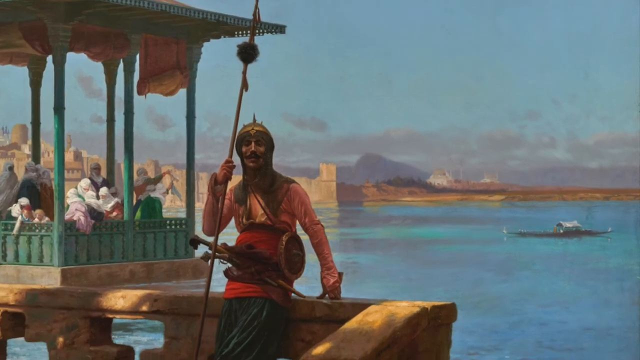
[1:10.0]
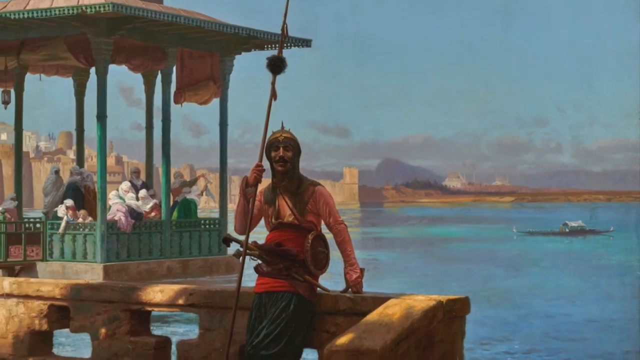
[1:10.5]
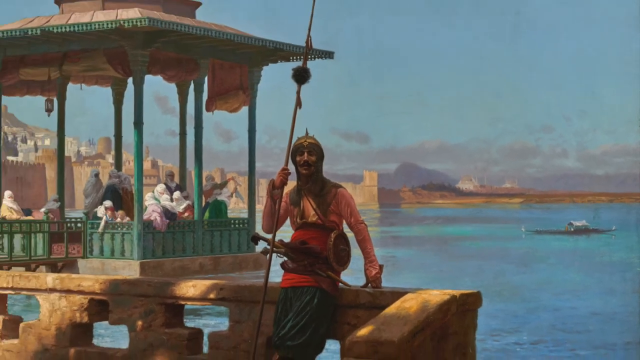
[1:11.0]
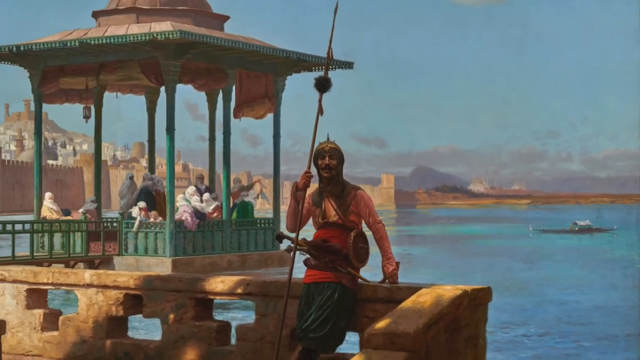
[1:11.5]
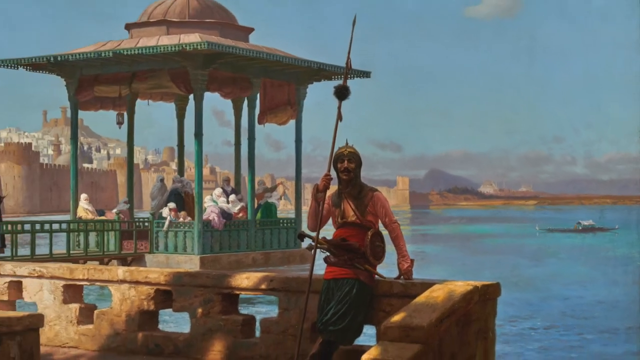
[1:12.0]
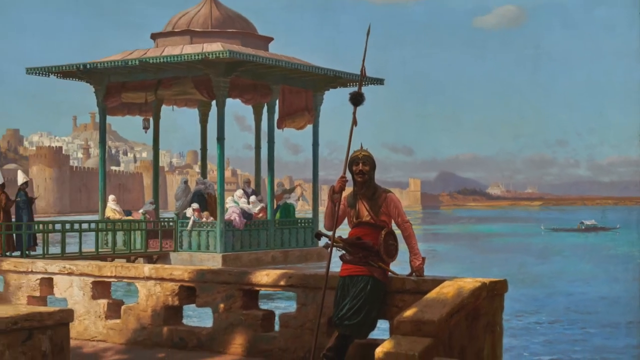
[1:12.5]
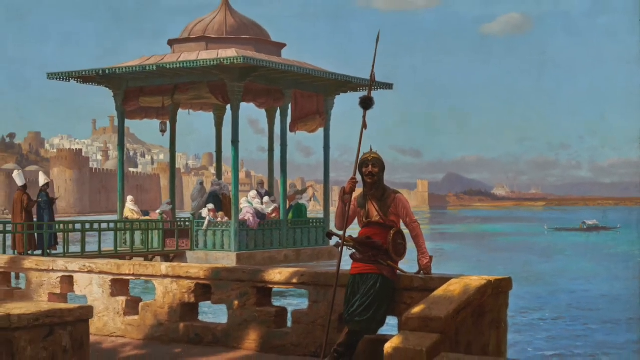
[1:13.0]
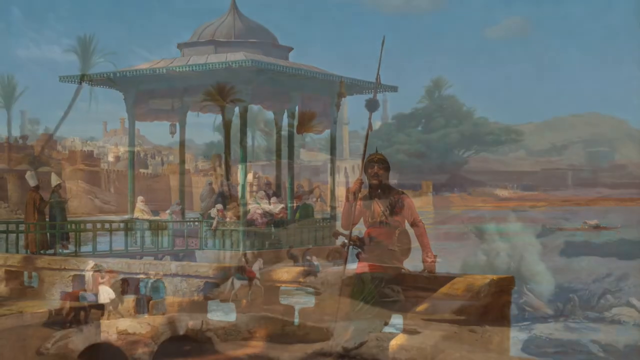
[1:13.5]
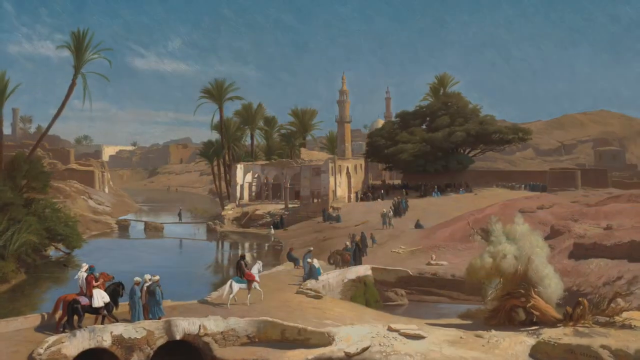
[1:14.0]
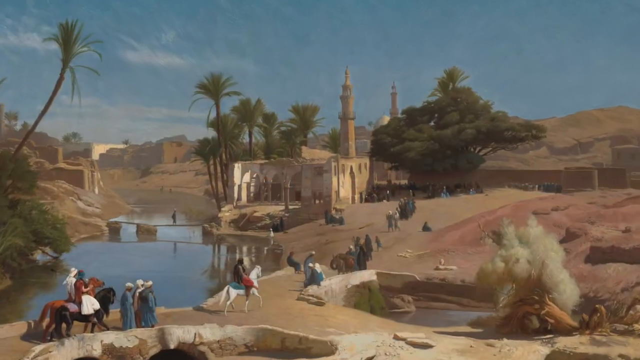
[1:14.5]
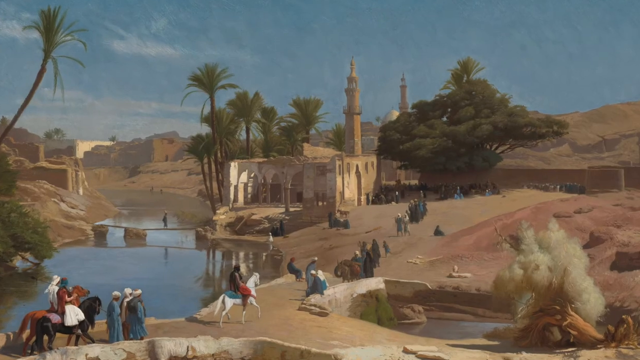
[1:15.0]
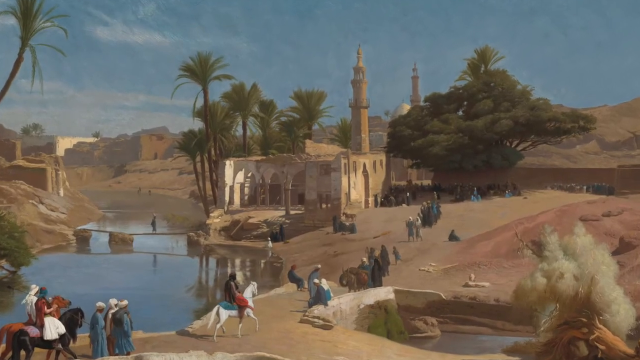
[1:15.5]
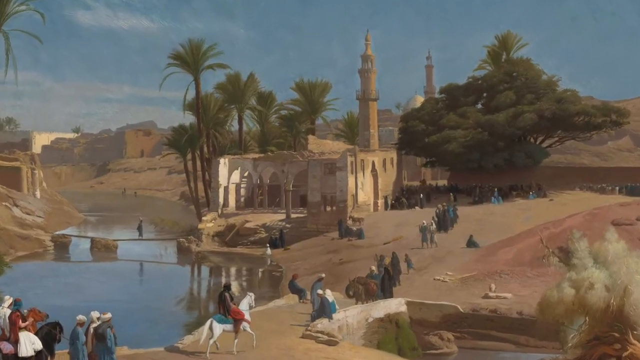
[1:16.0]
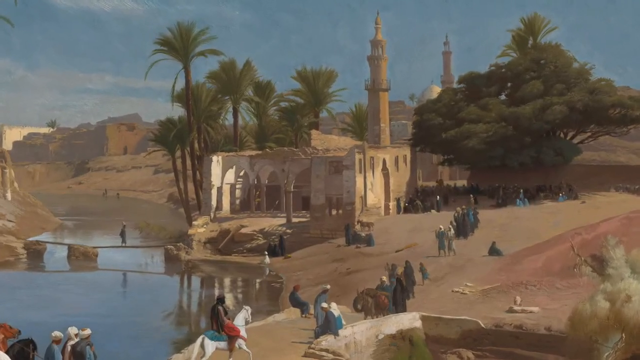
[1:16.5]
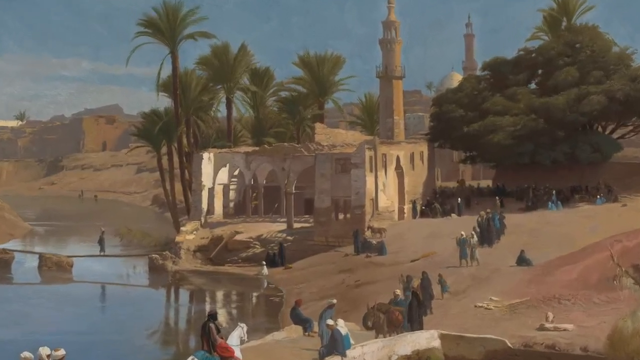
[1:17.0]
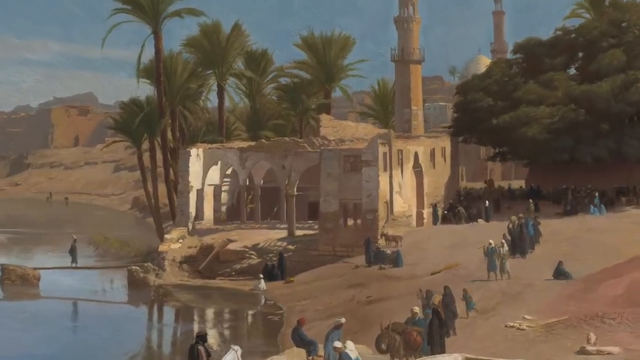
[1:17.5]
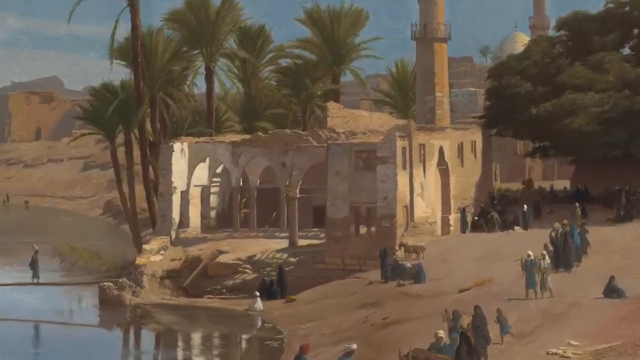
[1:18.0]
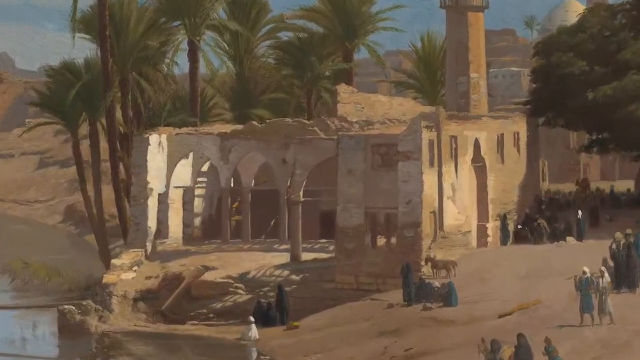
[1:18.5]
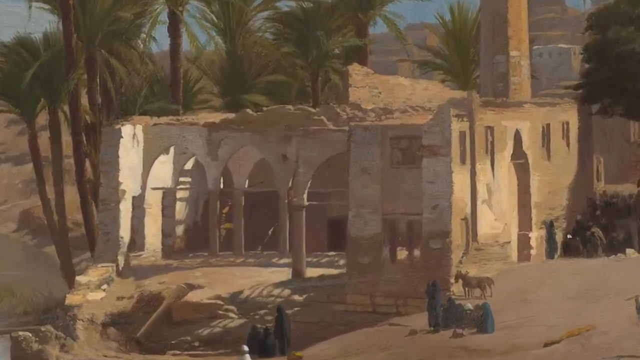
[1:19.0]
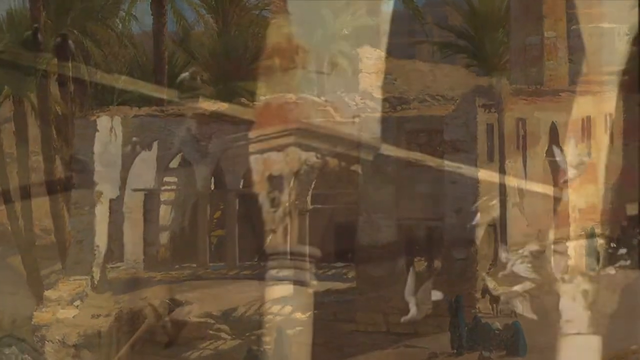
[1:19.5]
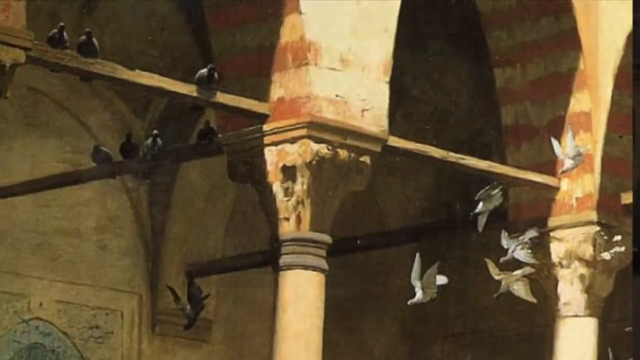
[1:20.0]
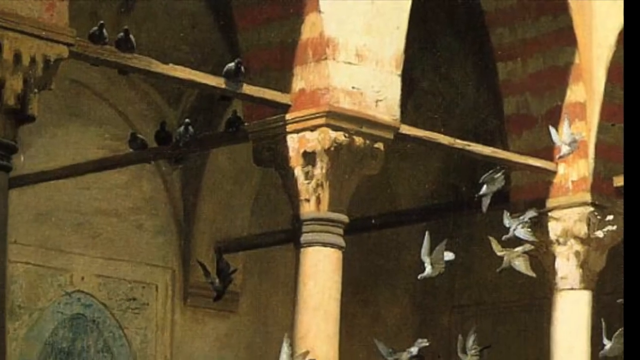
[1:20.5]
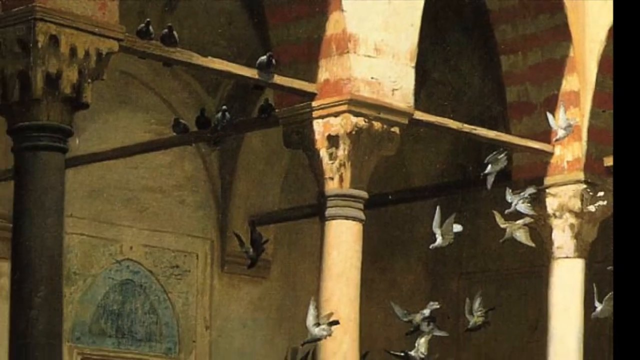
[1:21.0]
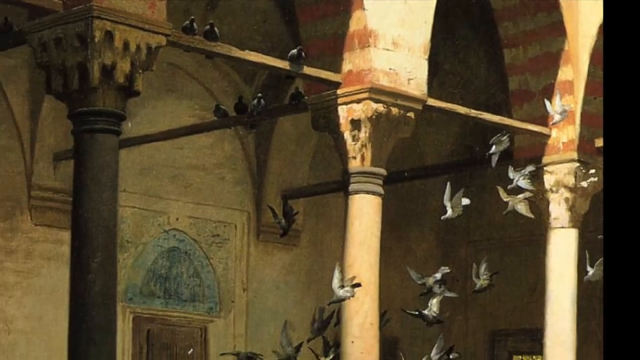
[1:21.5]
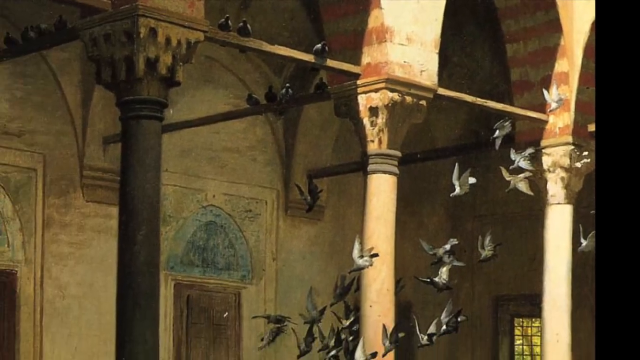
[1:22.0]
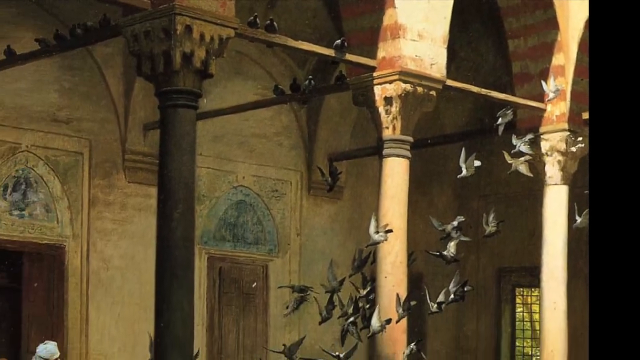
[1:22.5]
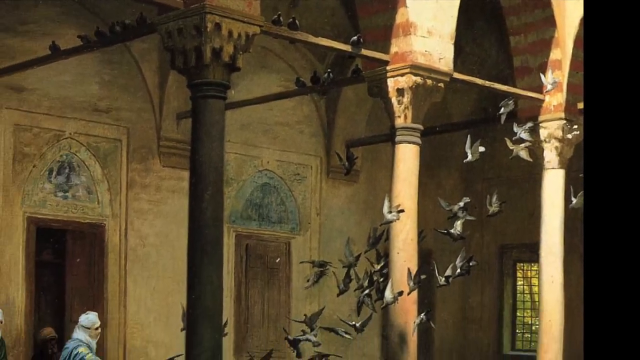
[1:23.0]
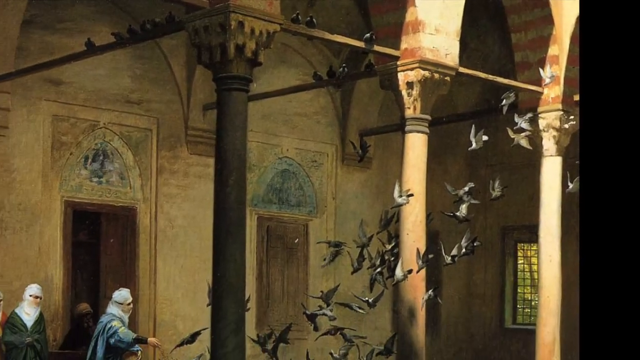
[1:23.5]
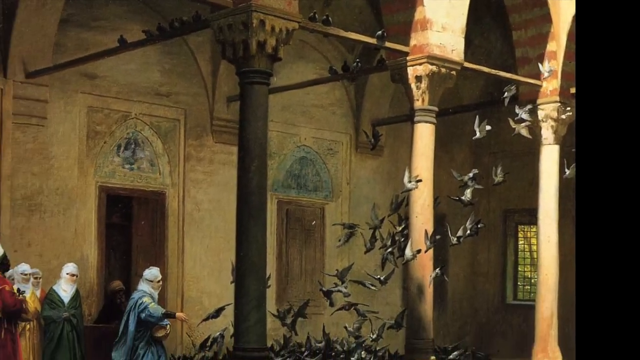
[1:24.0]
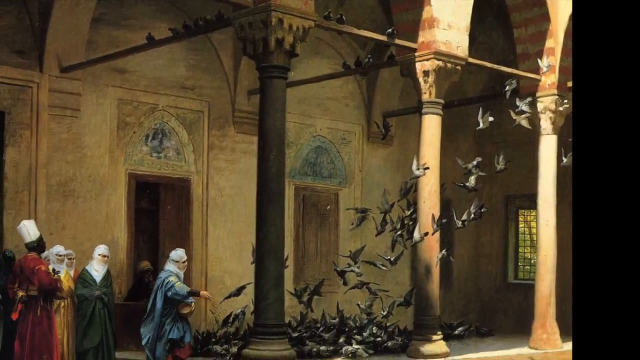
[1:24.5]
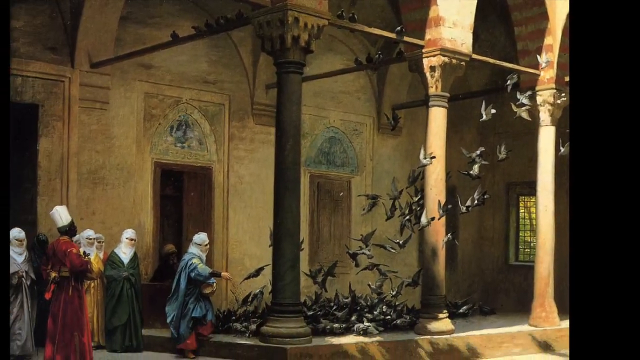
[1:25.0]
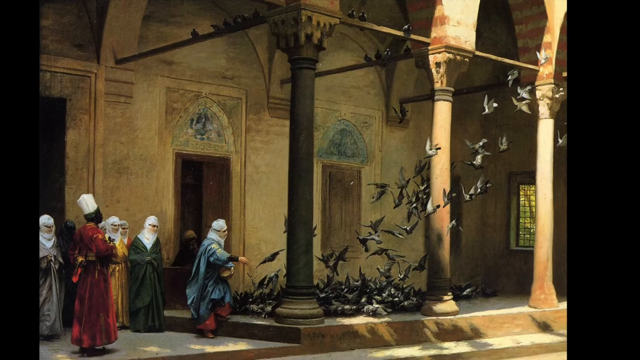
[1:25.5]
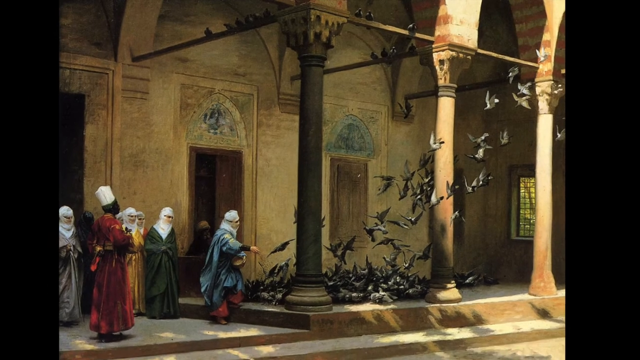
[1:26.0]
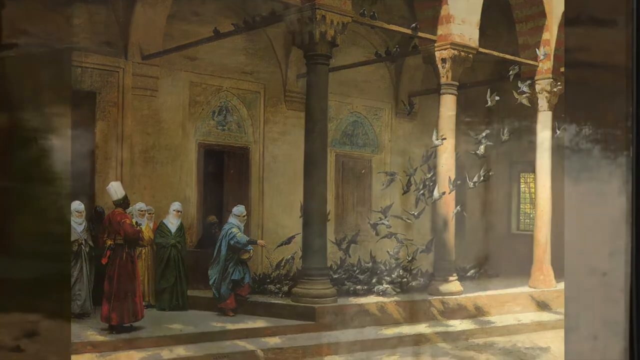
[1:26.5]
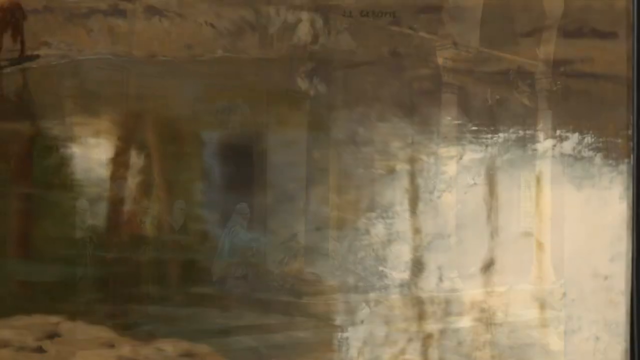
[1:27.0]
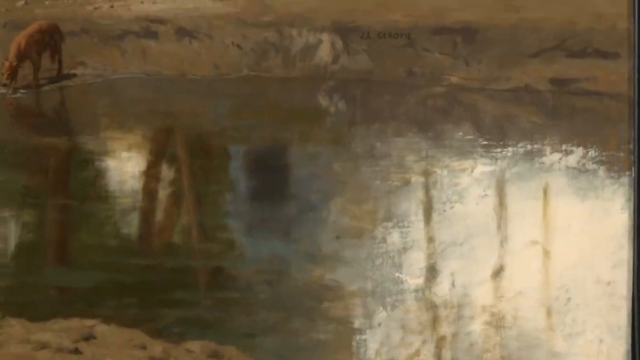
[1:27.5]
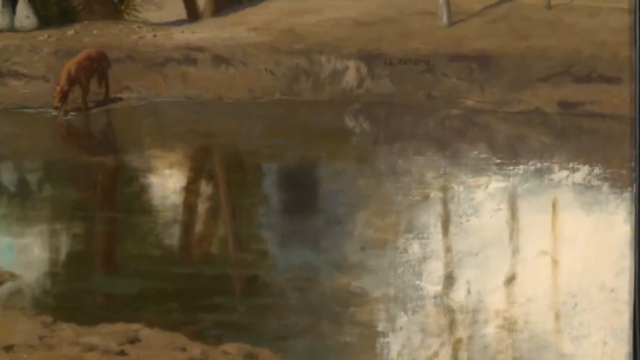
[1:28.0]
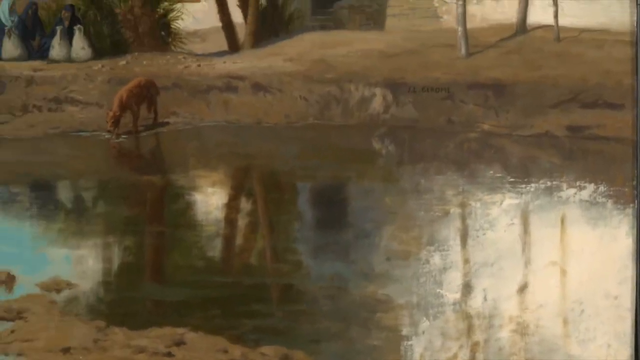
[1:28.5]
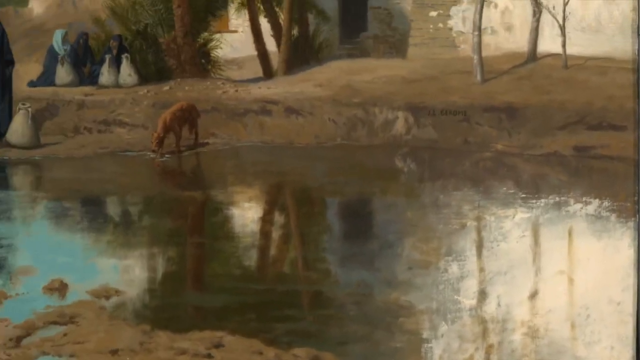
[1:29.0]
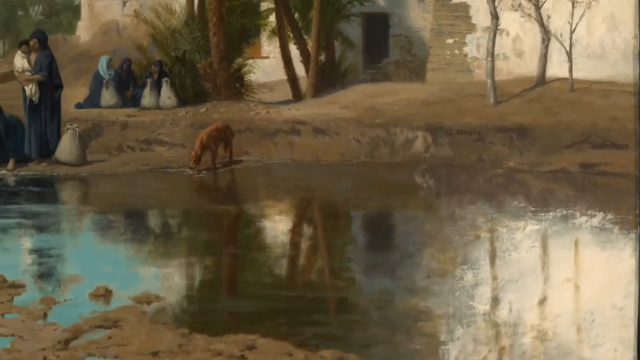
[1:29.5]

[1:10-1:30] An individual in a painting seems to be posing while holding a spear, wearing headgear with a little spike on top. Next to them on the right is something like a canopy or gazebo where some individuals are hanging out. The camera pans out and focuses on a building next to a bunch of trees and the water; the building looks somewhat ancient and worn, but seems to still be in use. The camera then pans inside the building, showing pigeons and some individuals who look like they are feeding them. The individuals wear long garments in various colors: one in red, another in yellow or gold, green, and a lightest blue, and most have some type of headdress. Pigeons flock in, with a lot of them on the ground by large pillars. Light shines in, highlighting the pillars, and the structures of the doors are visible, one of them open.